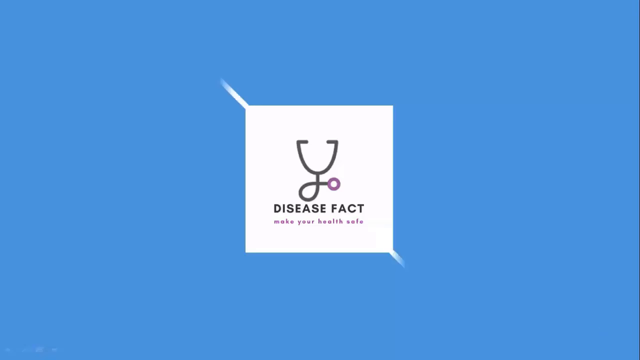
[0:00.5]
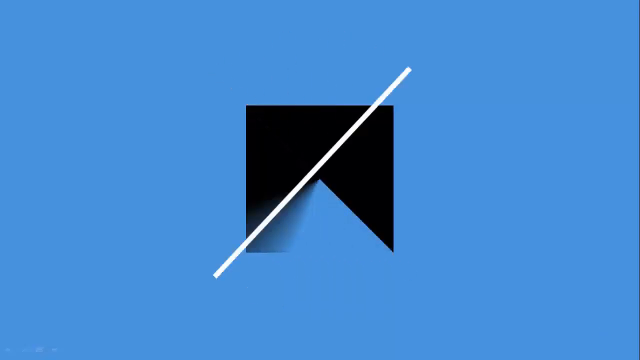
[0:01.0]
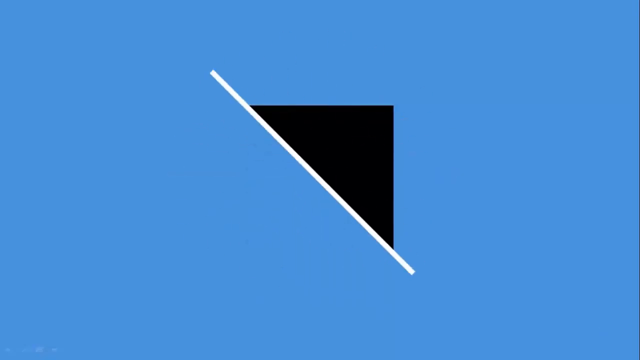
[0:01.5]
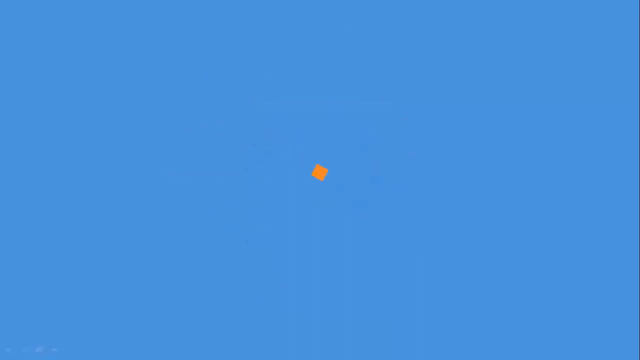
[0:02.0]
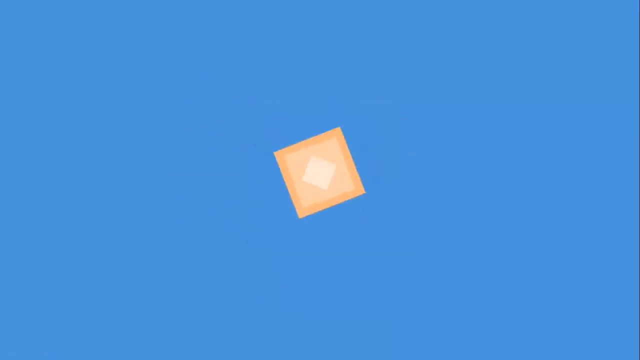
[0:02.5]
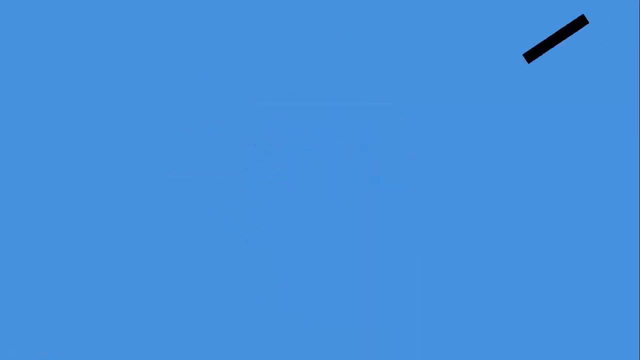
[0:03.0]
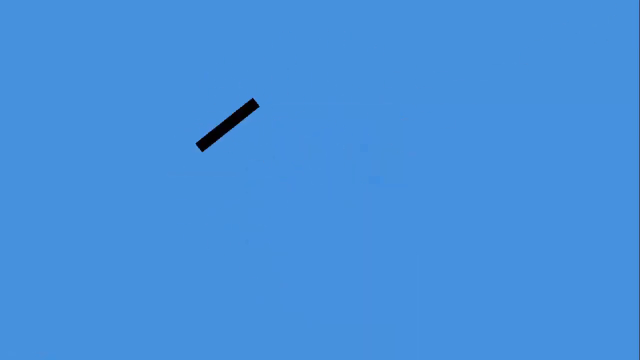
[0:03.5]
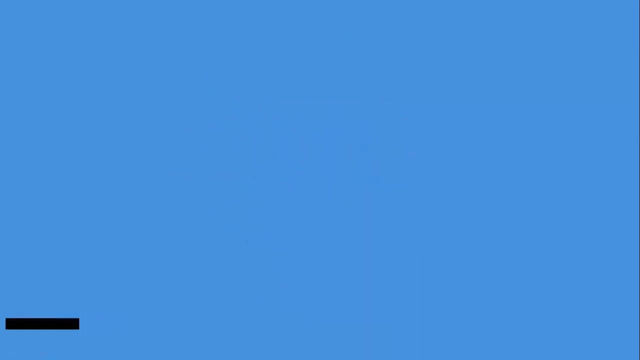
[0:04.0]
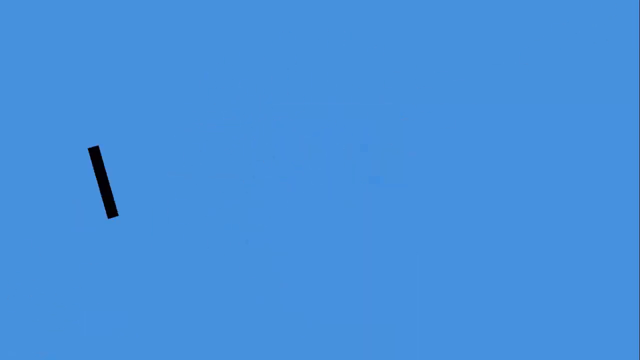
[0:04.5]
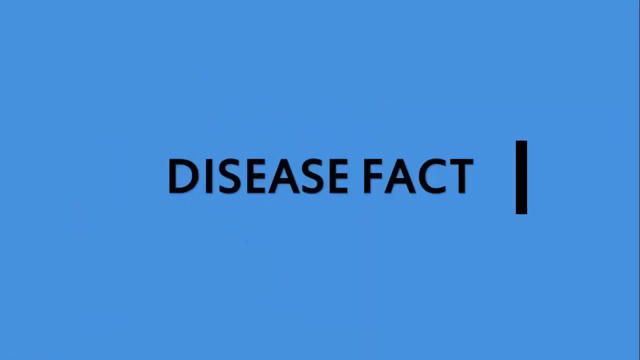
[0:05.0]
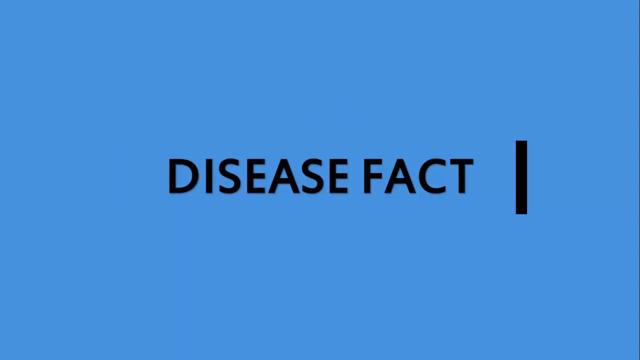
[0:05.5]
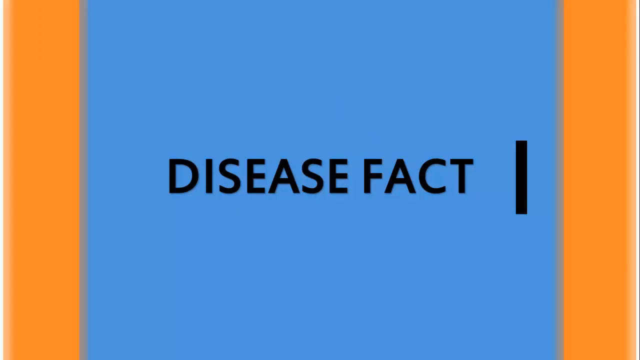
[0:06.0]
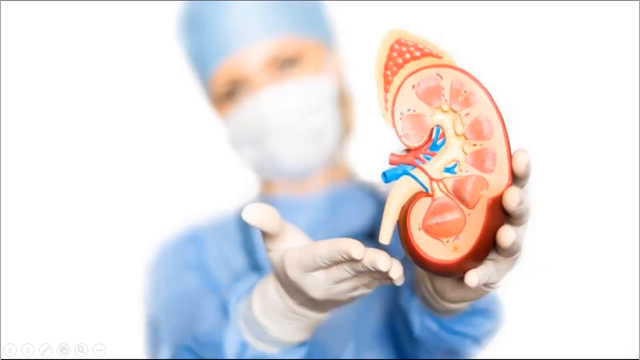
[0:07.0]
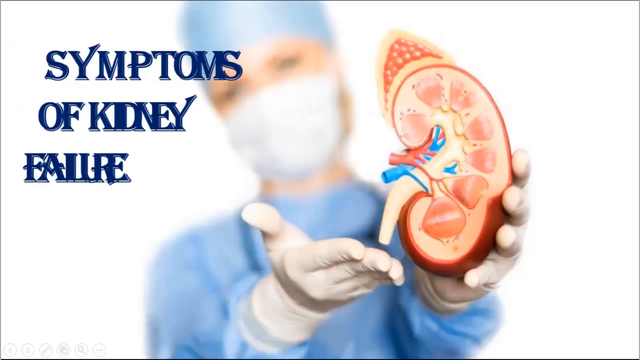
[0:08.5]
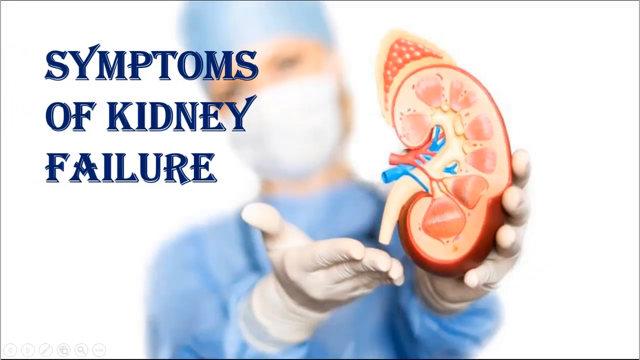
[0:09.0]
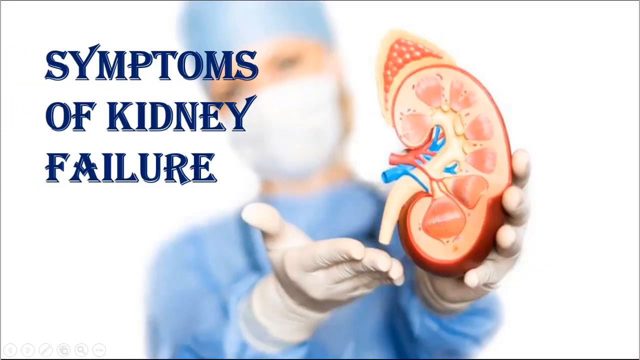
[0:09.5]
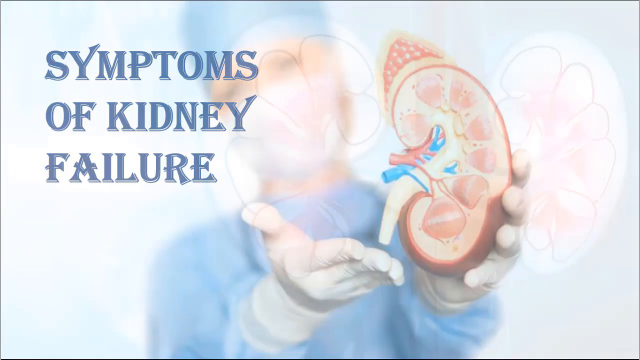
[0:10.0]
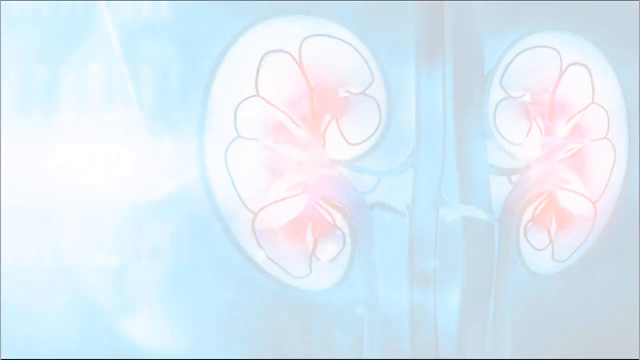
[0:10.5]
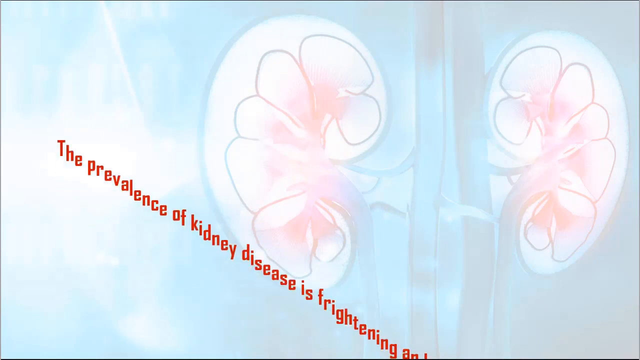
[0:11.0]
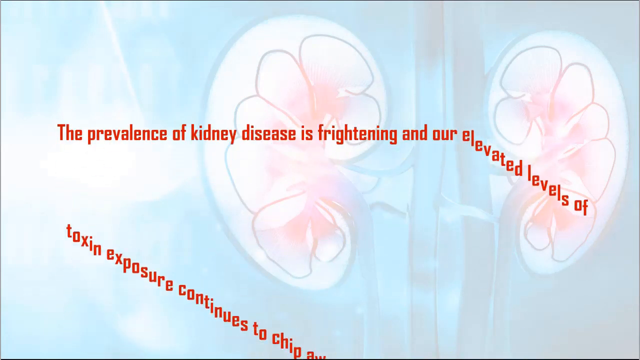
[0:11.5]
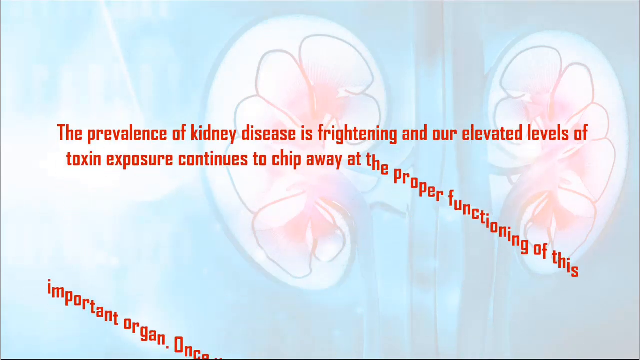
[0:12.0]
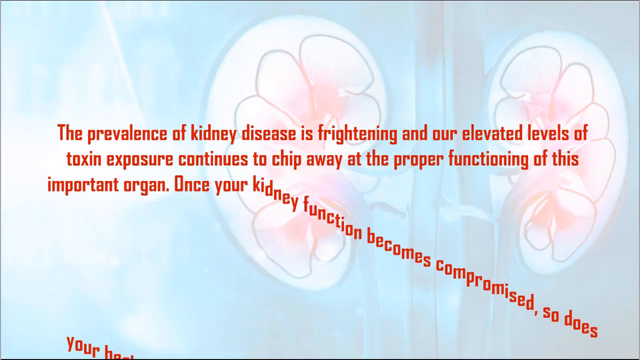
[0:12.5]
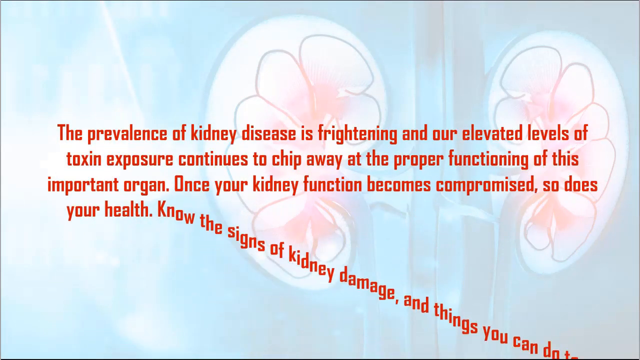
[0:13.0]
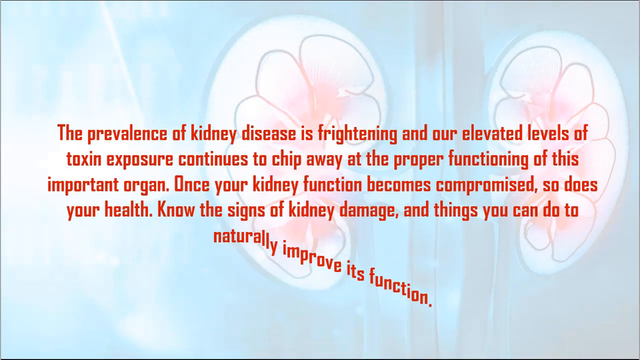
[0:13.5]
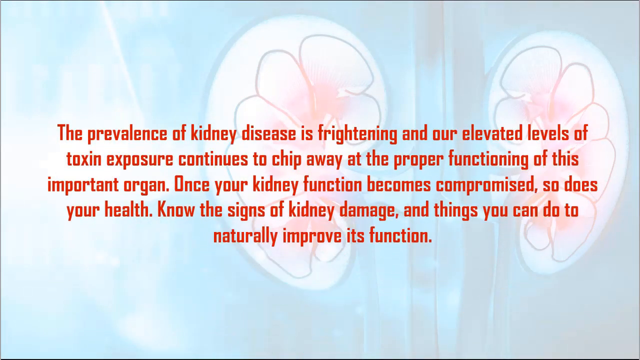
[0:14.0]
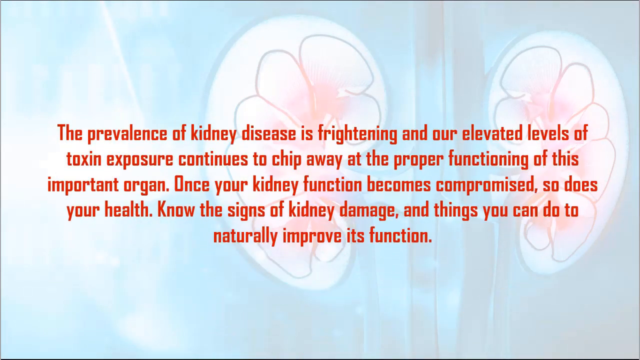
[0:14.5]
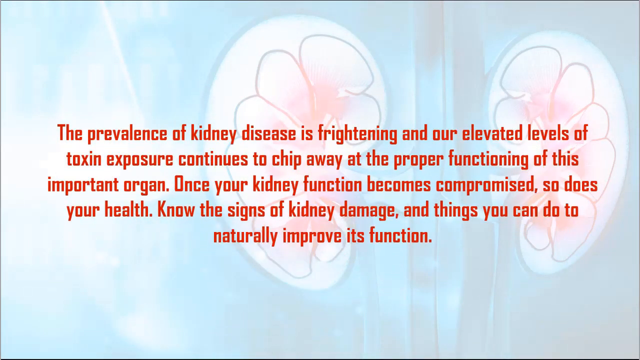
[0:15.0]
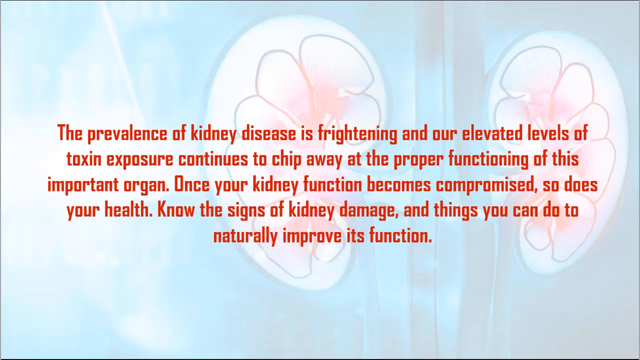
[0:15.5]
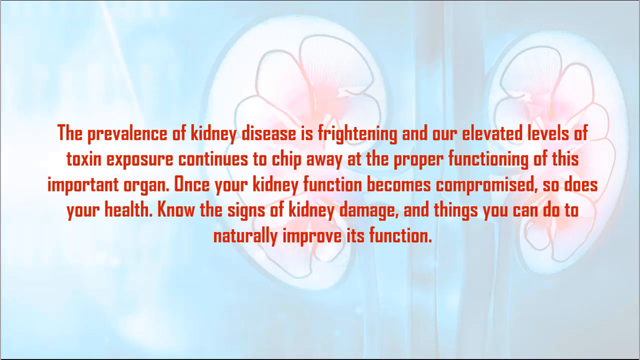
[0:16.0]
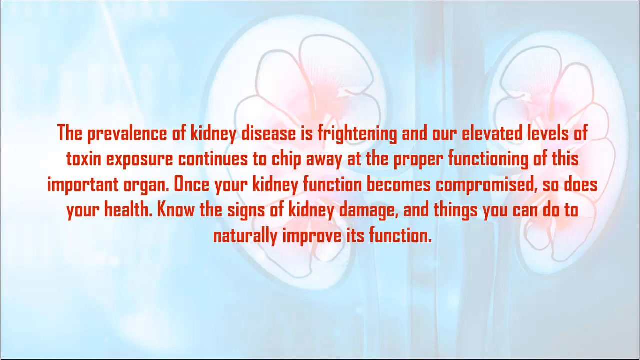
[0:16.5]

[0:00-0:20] The video opens on a blue screen with a white rectangle in the center containing a drawing of a black stethoscope, with a small purple circle at its end. Underneath the stethoscope are the words "disease fact" in black, and below that phrase, in a smaller purple font, are the words "make your health safe". A white line then appears in the upper left and goes through to the lower right of the rectangle. The line spins around and erases the white square; as it spins it leaves a black square that also disappears. It eventually stops pointing to the upper left and bottom right of the image, with a black triangle on the upper right side of the line. A series of small orange and white squares appear on the blue screen and then disappear. From the upper right, a small, thick black line spins downward to the bottom left corner of the screen, bounces back up to the upper right, and rests on the right side of the center of the screen, and the words "disease fact" appear in black in the center. Next comes a picture of a doctor holding a fake kidney against a white background, with the on-screen text "symptoms of kidney failure". The doctor wears blue scrubs and a white mask. The video then transitions to a drawing of two kidneys in the background; the kidneys are mostly white with black inside, and two blue tubes are between them. Red text reads: "the prevalence of kidney disease is frightening and our elevated levels of toxin exposure continues to chip away at the proper functioning of this important organ. Once your kidney functions become compromised, so does your health. Know the signs of kidney damage and things you can do to naturally improve the function."